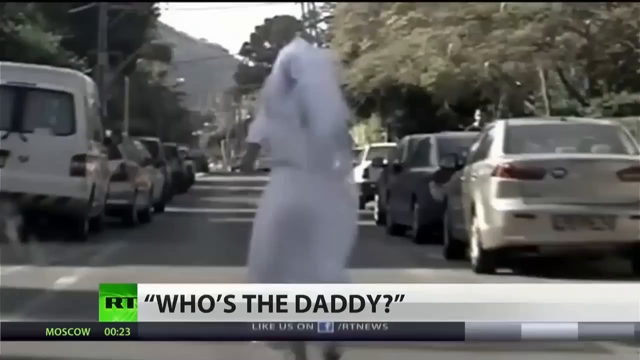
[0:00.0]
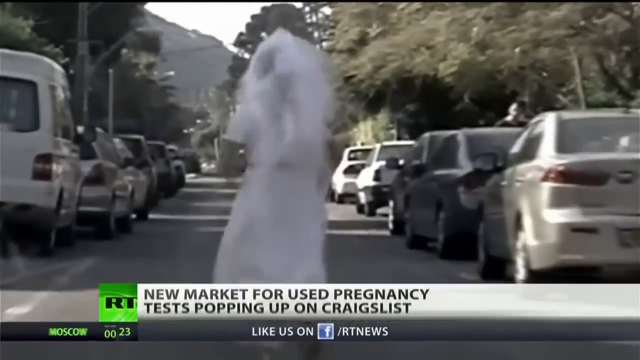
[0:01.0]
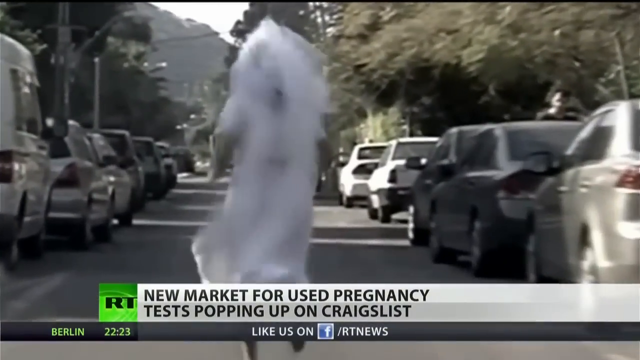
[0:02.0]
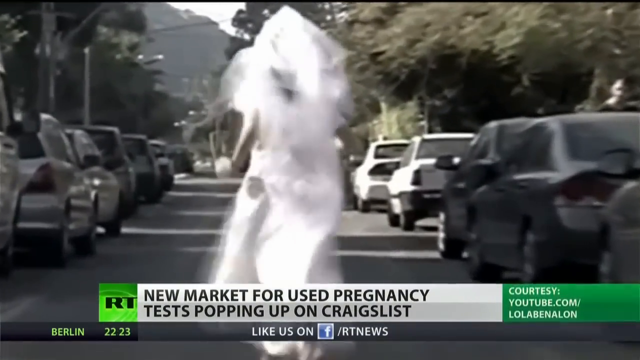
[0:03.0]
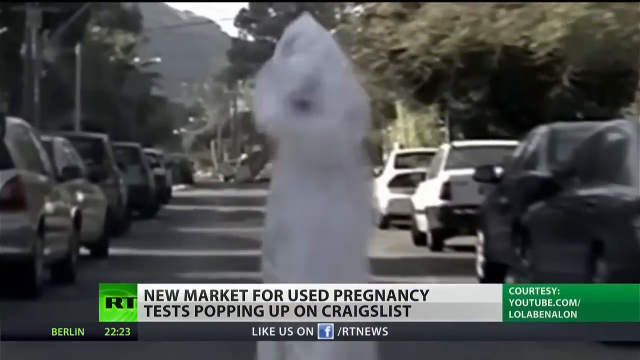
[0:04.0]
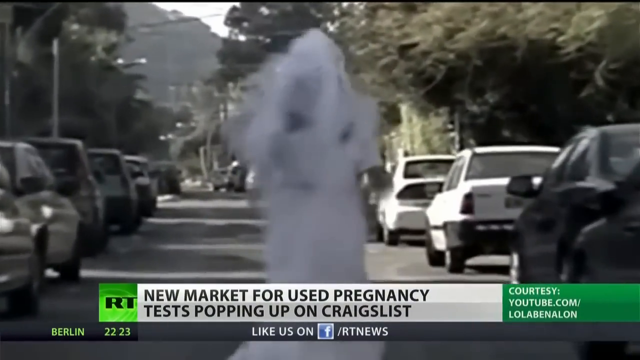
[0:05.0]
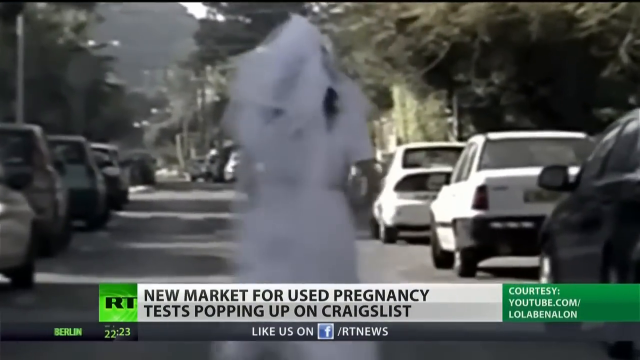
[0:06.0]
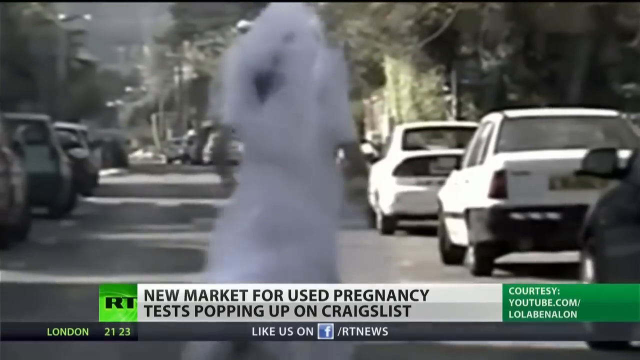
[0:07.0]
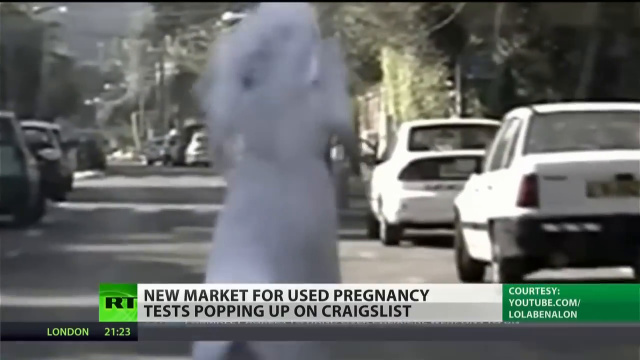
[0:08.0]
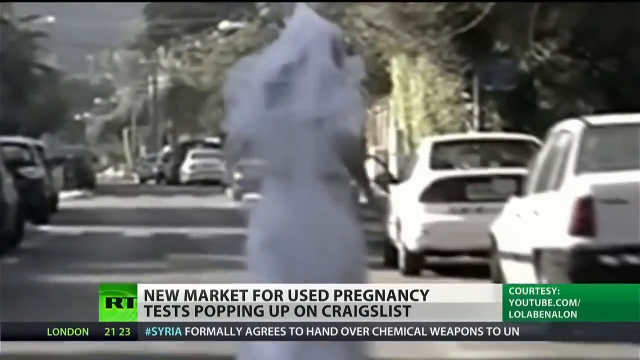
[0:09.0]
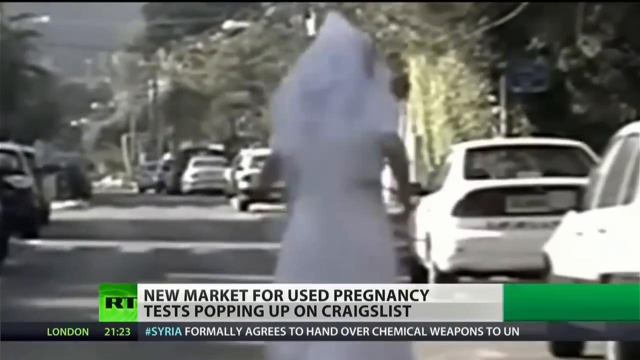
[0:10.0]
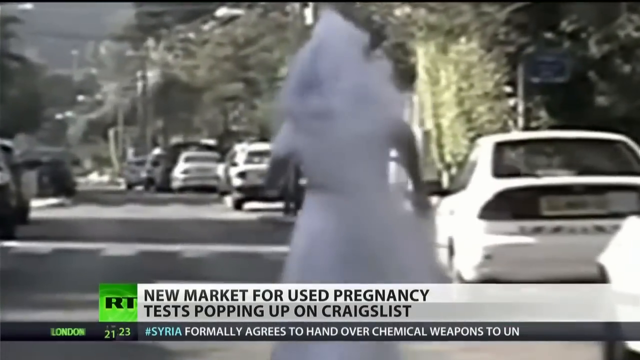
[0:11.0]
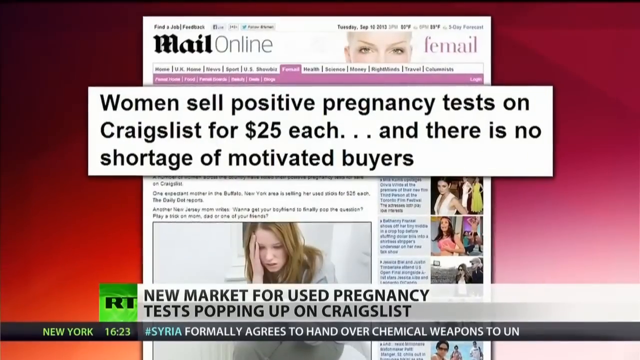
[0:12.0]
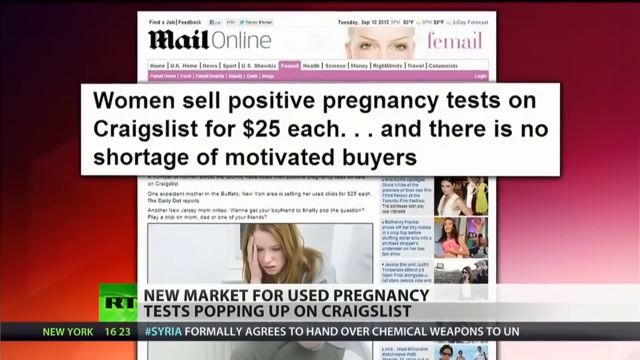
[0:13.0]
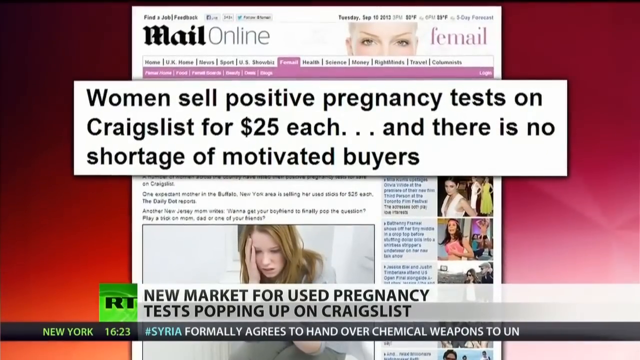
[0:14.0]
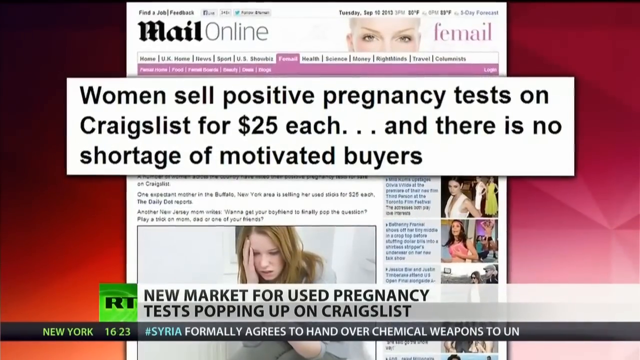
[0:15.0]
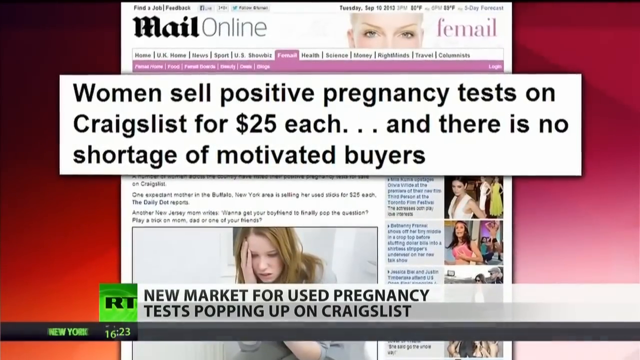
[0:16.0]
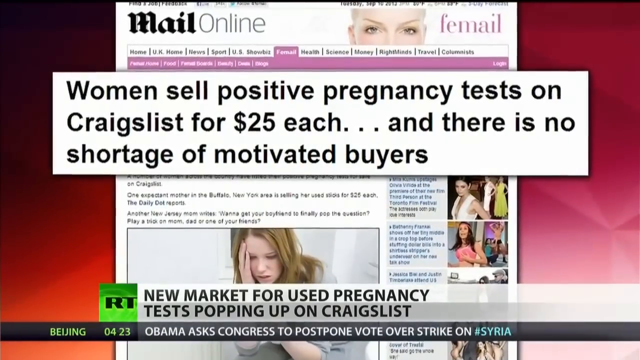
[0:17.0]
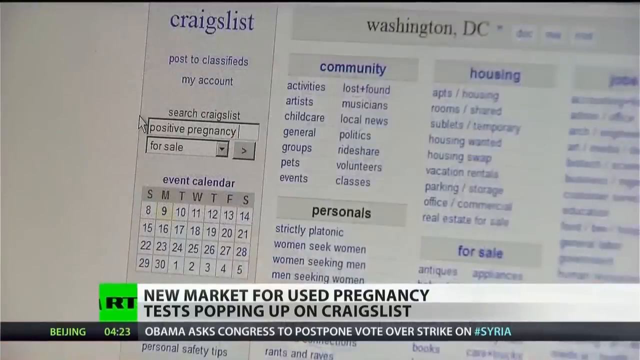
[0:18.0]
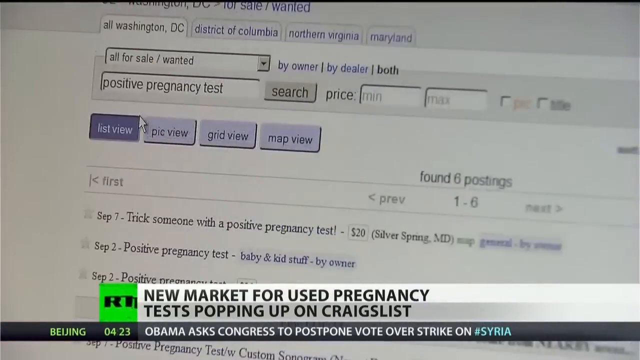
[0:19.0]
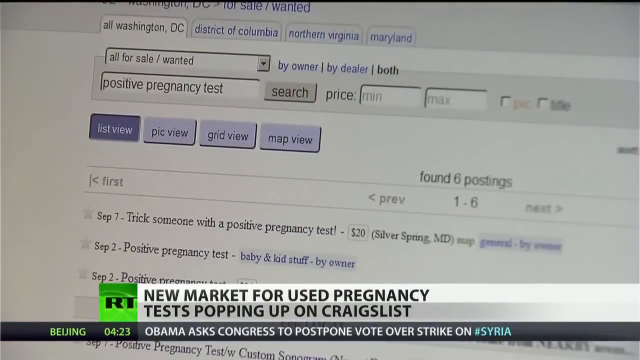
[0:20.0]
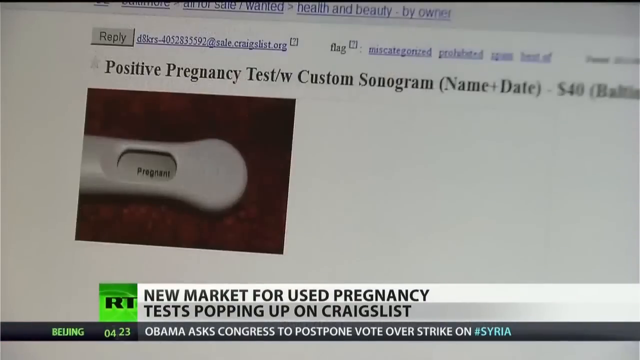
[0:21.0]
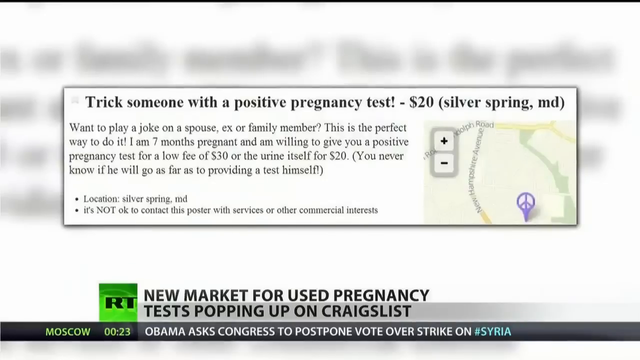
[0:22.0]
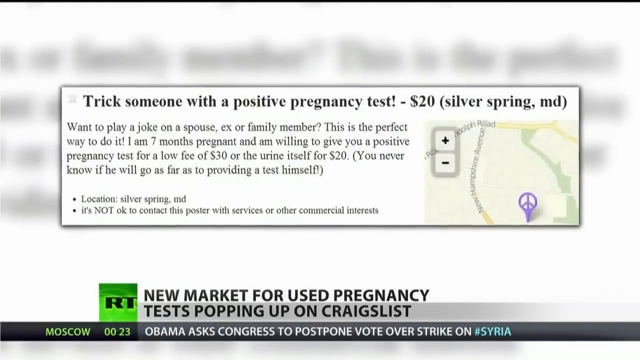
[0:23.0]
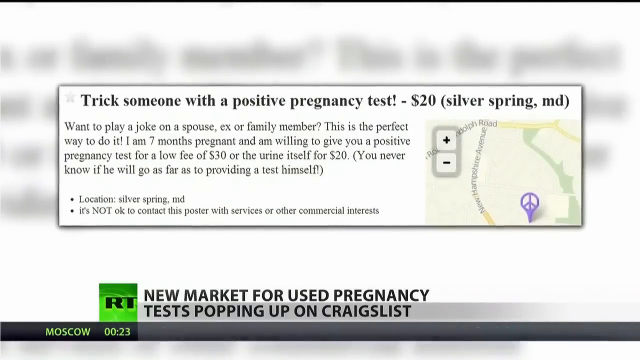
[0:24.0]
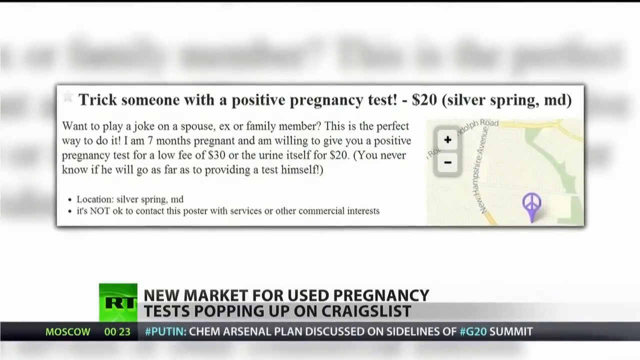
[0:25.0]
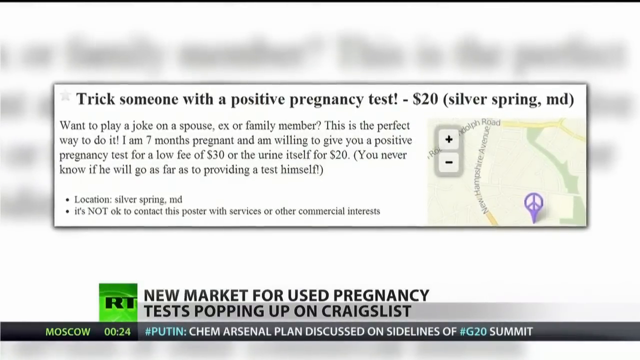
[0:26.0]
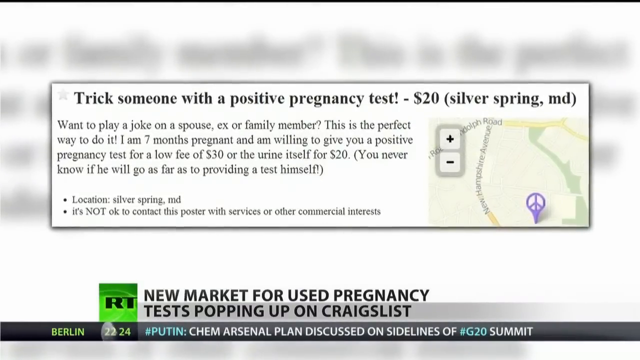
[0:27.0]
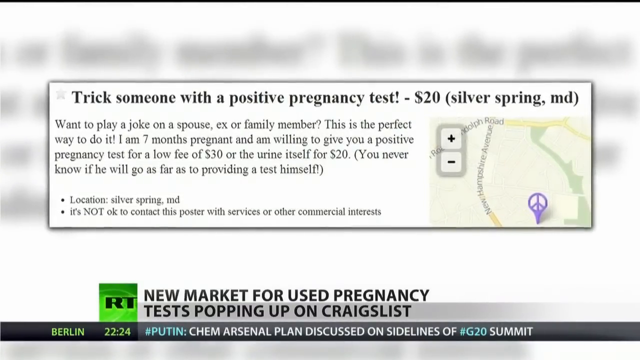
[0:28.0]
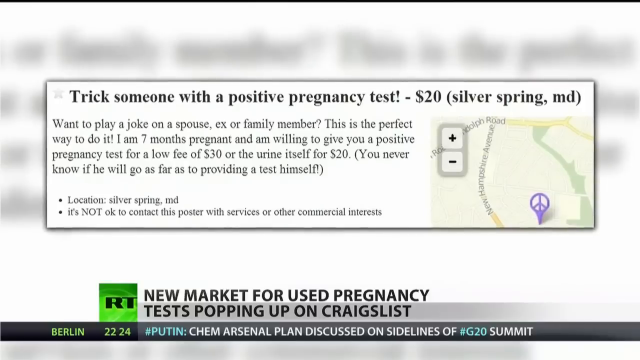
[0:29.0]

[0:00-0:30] A news report opens with the RT logo at the bottom of the screen and the text "who's the daddy?" A person in a wedding gown runs down the middle of a city street with cars parked on either side. The banner at the lower part of the screen changes to "new market for used pregnancy tests popping up on Craigslist," and "courtesy youtube.com" appears on the right side. An article from the mail online website appears in the middle of the page, titled "women can sell positive pregnancy tests on Craigslist for $25 each, and there is no shortage of motivated buyers." A ticker at the bottom of the screen reads "Obama asked Congress to postpone vote over strike on Syria." A Craigslist page follows, with "positive pregnancy test" typed into the search box under "search Craigslist" and a drop-down menu beneath it with "for sale" selected. One listing reads "positive pregnancy test with custom sonogram, name plus date, $40" in Baltimore, and the title of the next page reads "trick someone with a positive pregnancy test, $20, Silver Spring, Maryland."